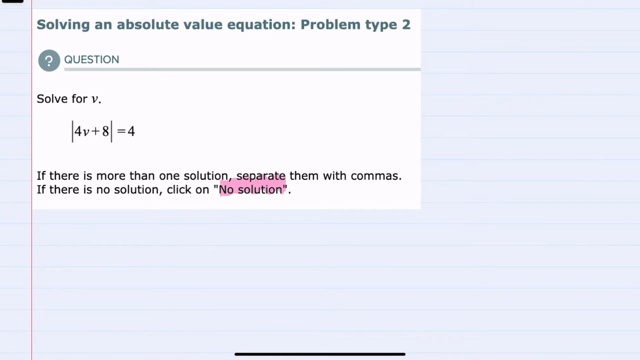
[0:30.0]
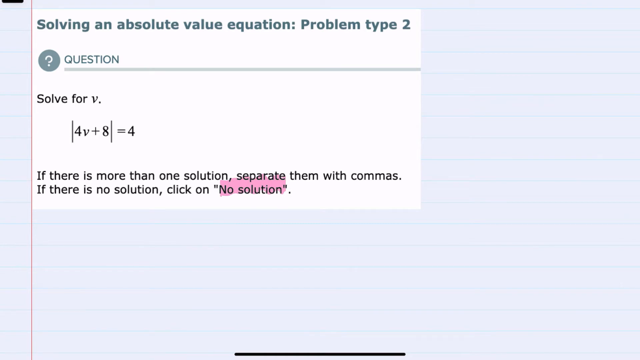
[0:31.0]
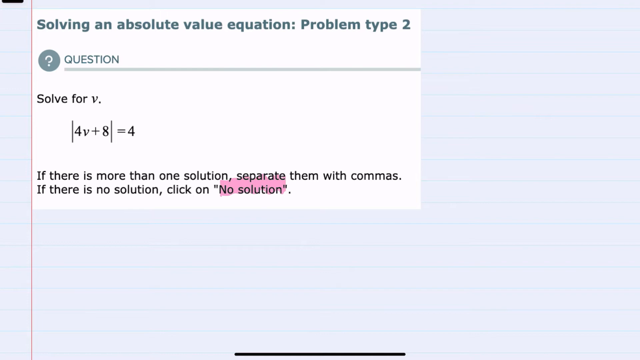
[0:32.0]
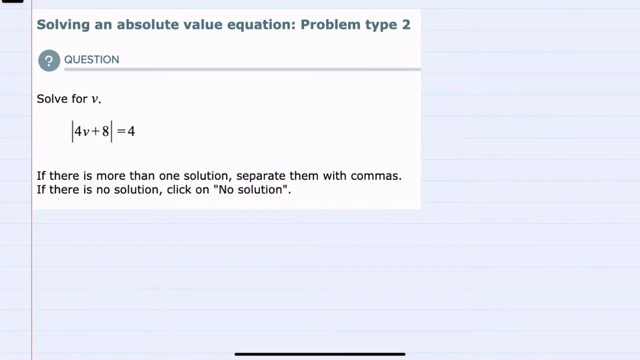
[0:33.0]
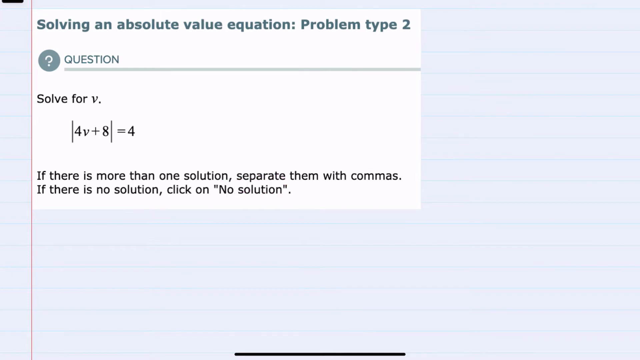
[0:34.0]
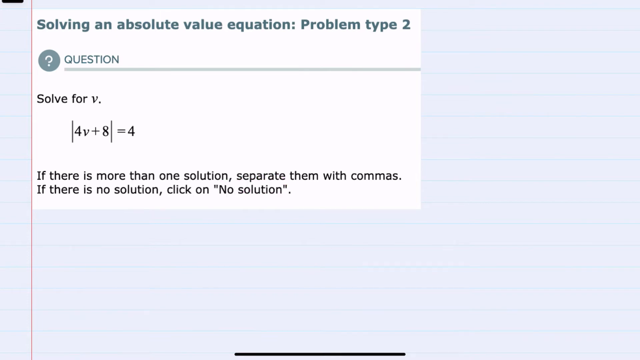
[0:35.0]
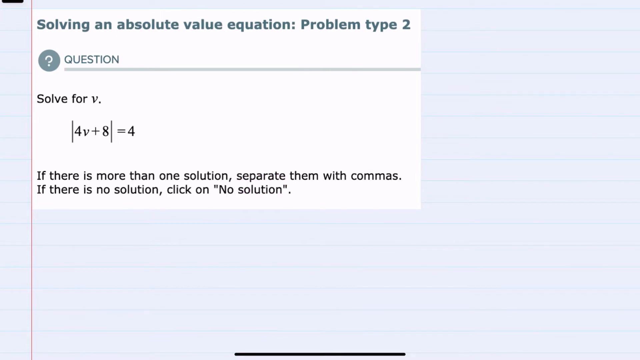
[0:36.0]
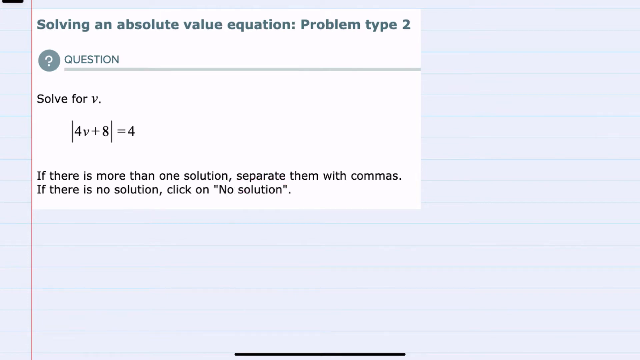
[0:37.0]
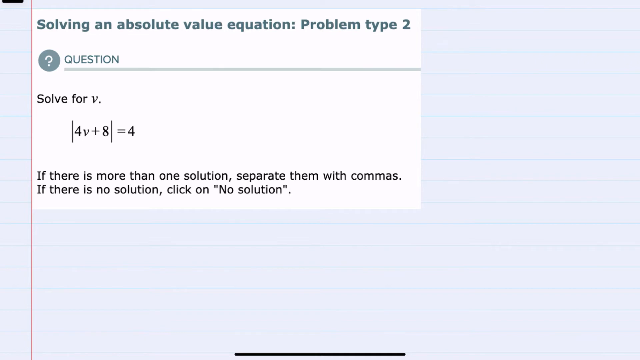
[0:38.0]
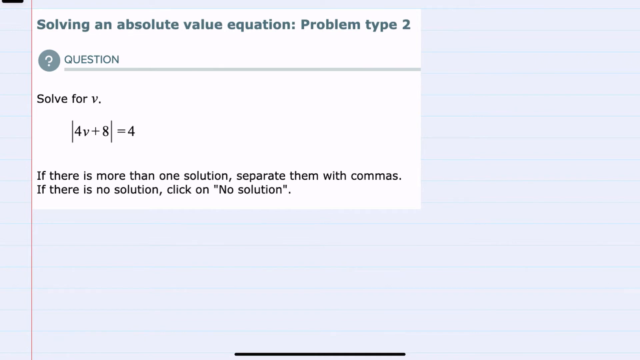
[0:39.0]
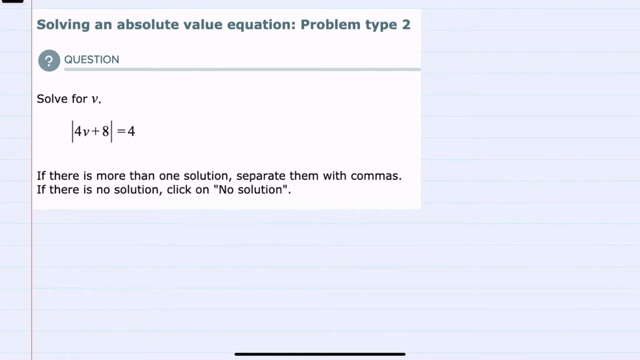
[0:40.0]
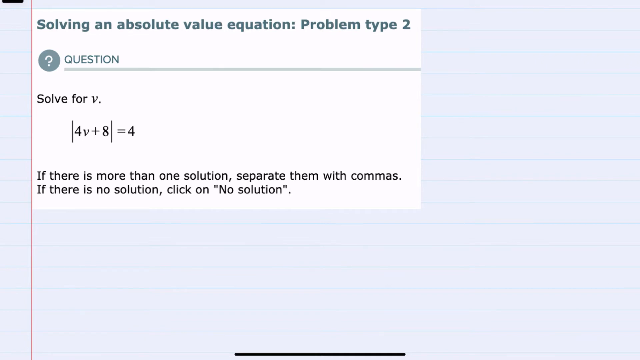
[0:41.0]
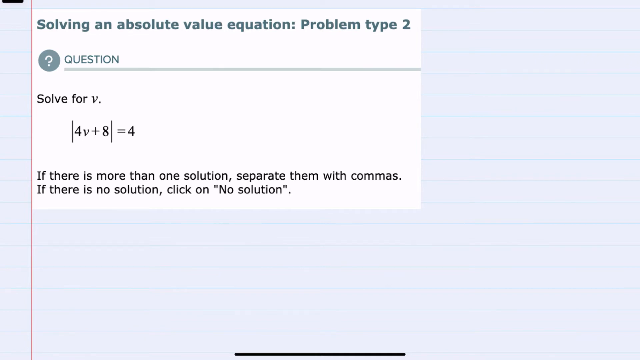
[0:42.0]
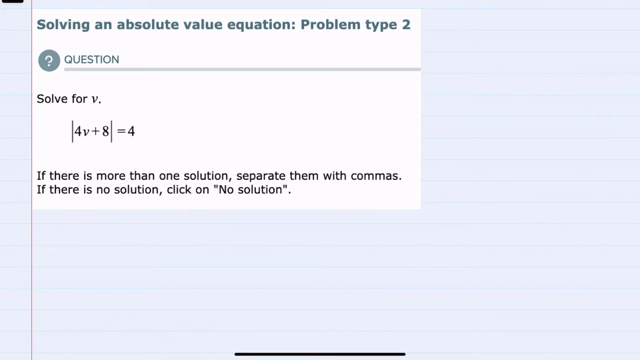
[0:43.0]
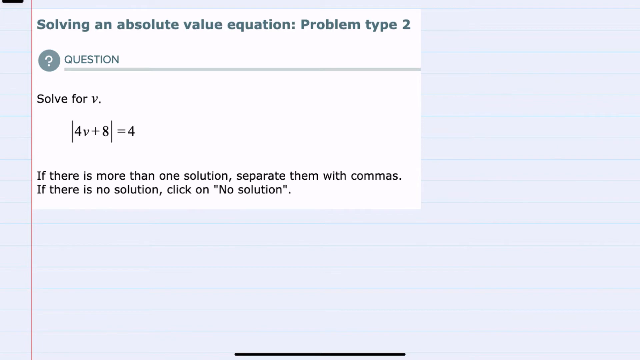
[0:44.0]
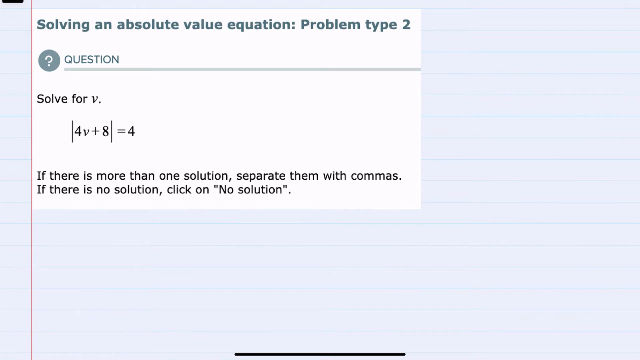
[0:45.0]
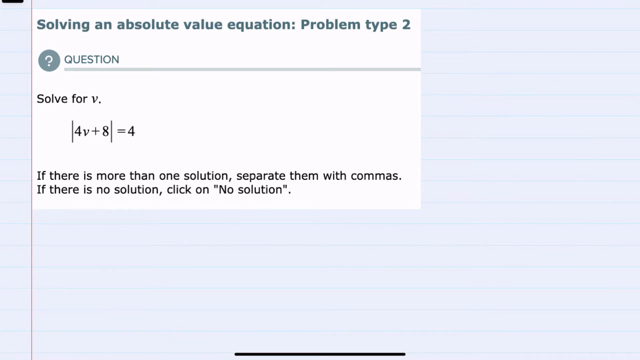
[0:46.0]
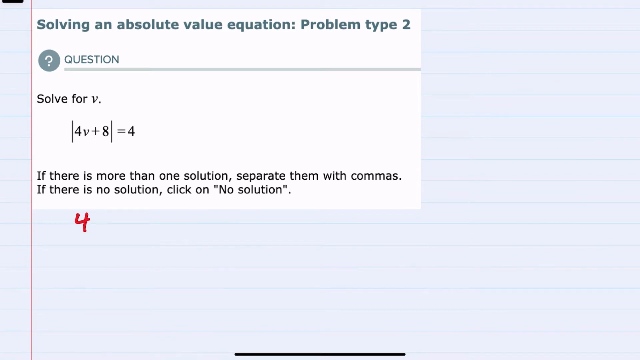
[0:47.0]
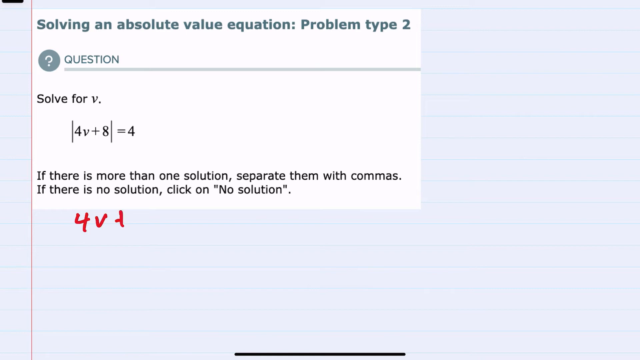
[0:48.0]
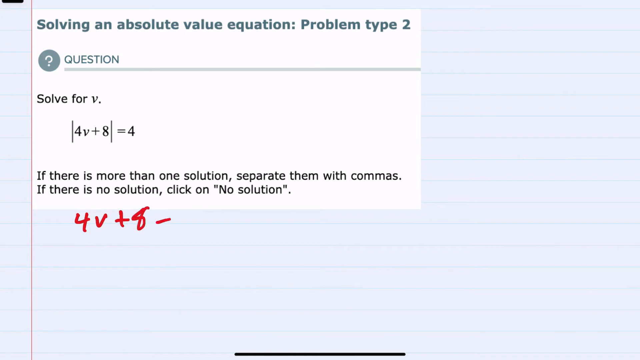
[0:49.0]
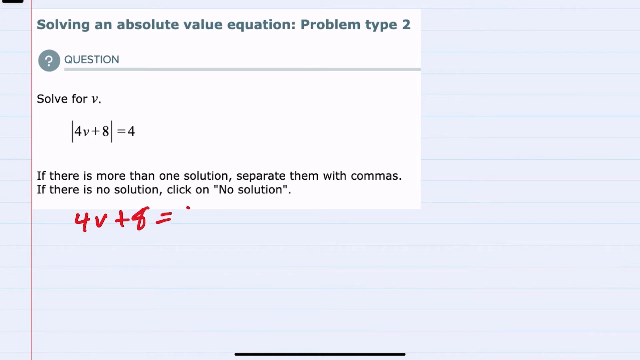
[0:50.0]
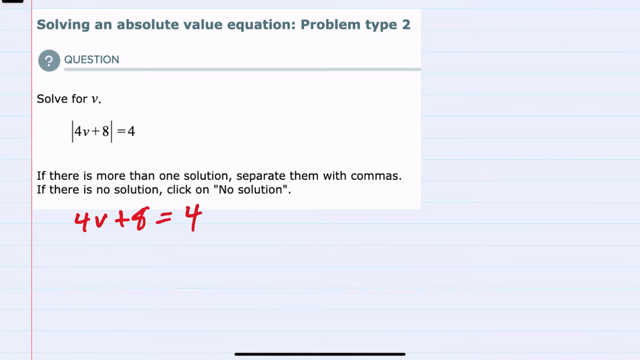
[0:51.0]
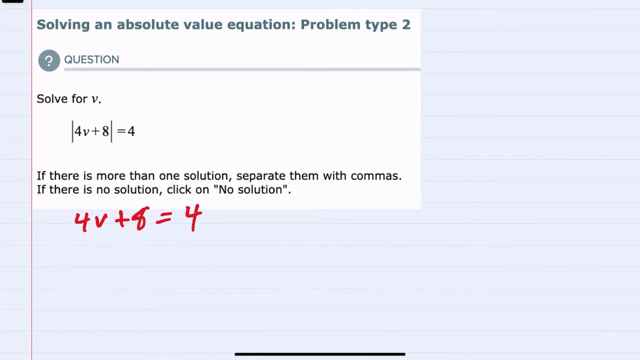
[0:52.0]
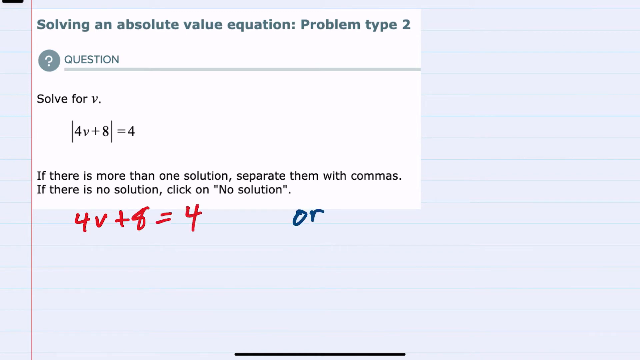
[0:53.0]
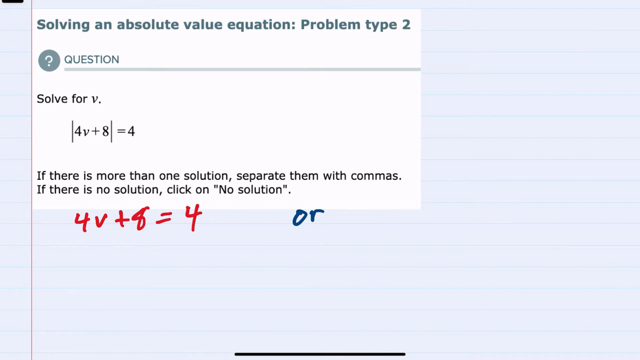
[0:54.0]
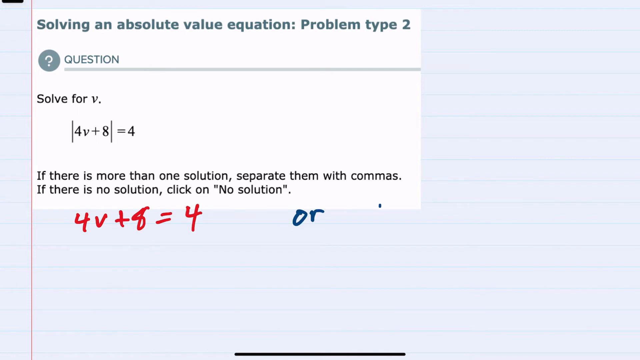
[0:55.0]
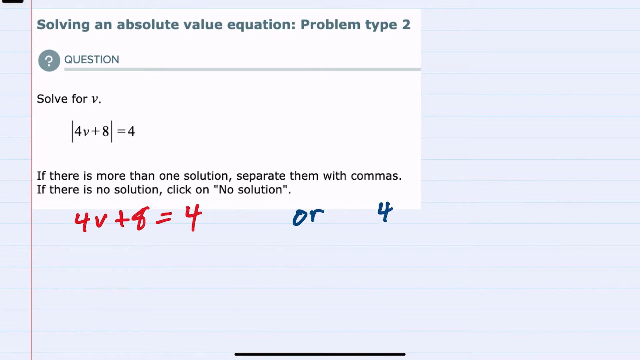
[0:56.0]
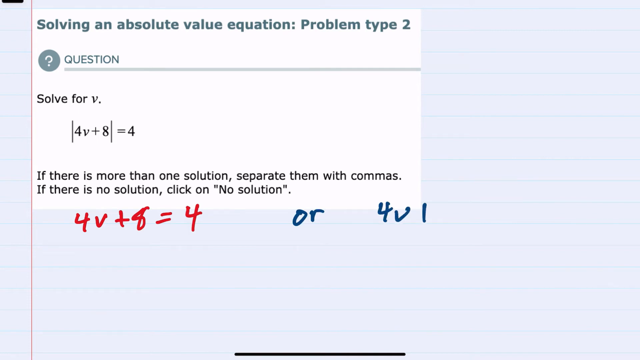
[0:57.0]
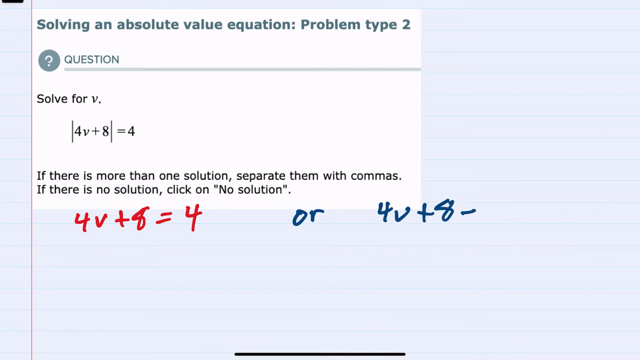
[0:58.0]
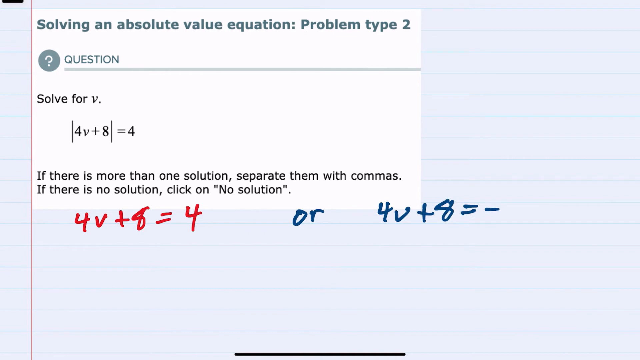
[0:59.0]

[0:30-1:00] An image that looks like a piece of paper has an overlay across the top reading "solving an absolute value equation, problem type 2", with a question icon and the word "question". The task is to solve for v, and the question is "4v + 8 = 4". Underneath, the instructions read "if there is more than one solution, separate them with commas, if there is no solution, click on no solution". "No solution" is already marked. Below, two equations are written: the first is "4v + 8 = 4", the same as the question, and the next, written in blue, is "or 4v + 8 = -4".